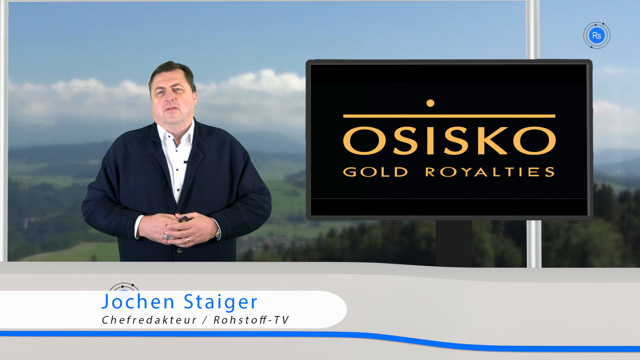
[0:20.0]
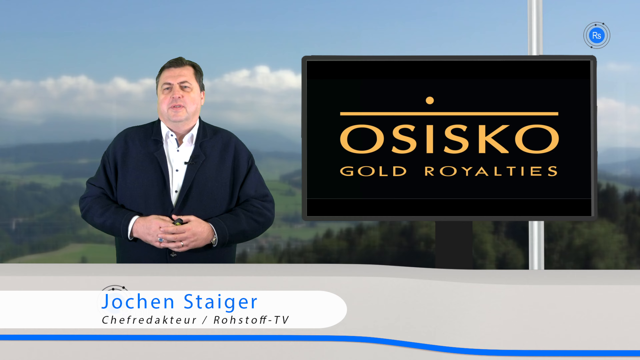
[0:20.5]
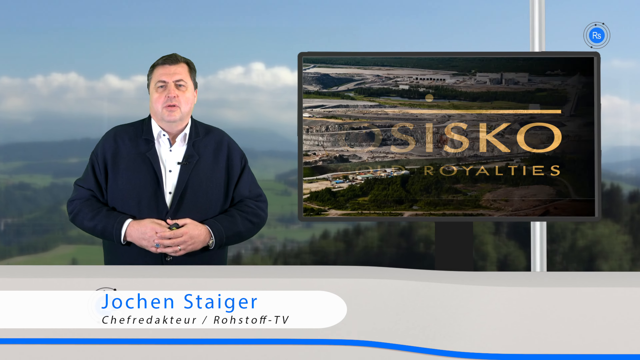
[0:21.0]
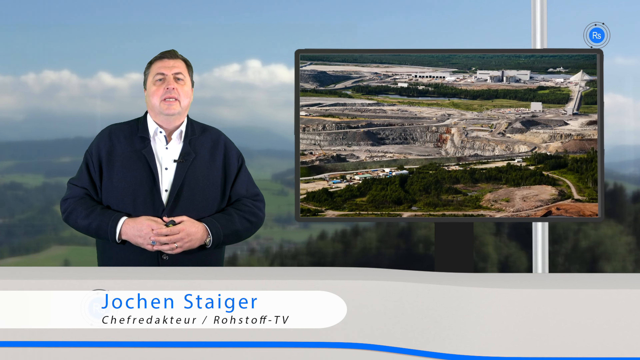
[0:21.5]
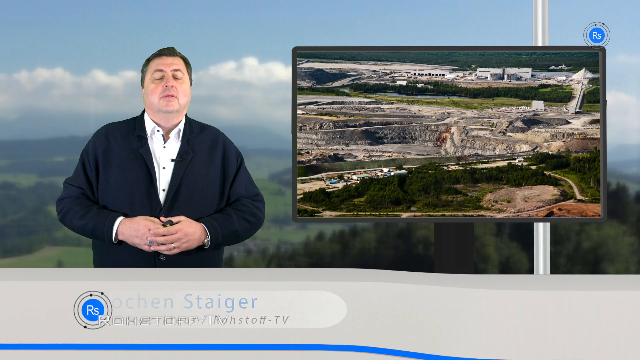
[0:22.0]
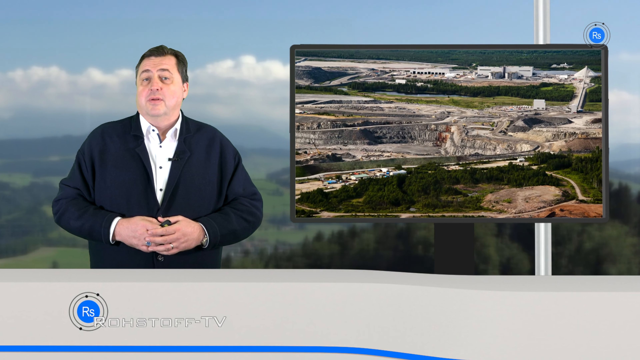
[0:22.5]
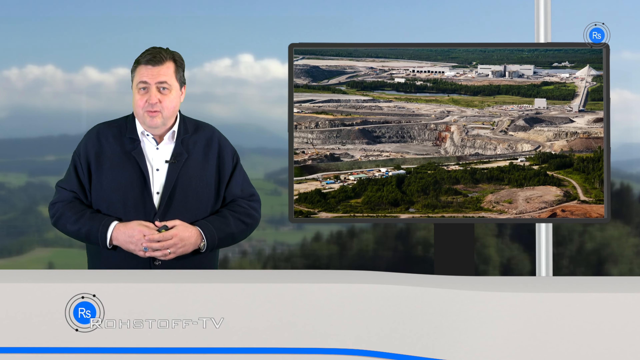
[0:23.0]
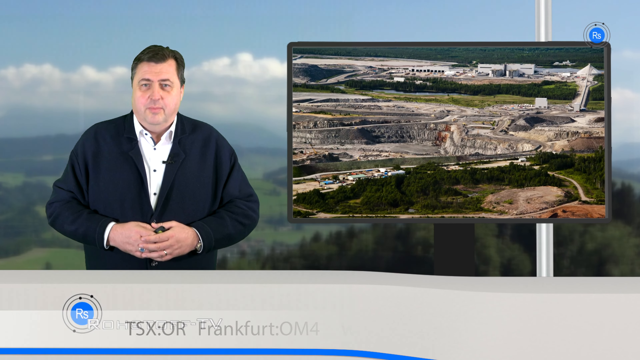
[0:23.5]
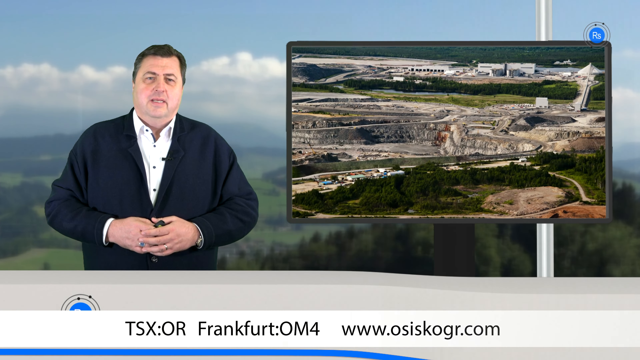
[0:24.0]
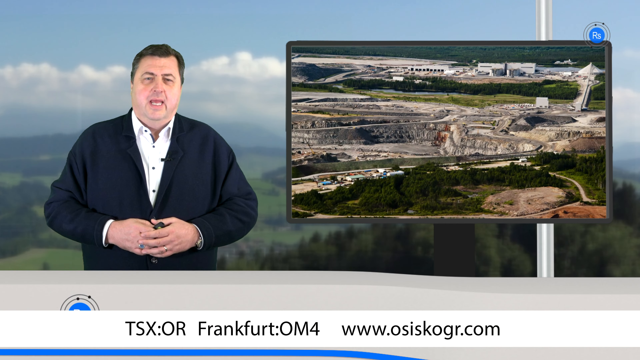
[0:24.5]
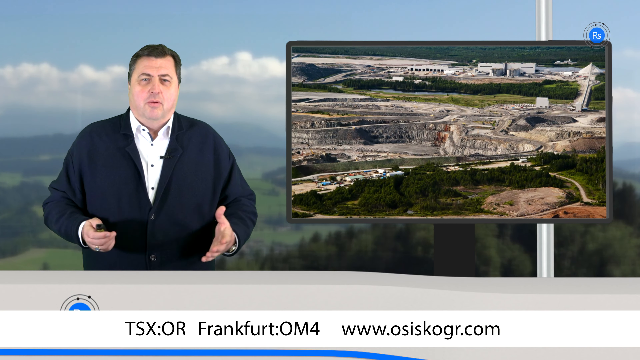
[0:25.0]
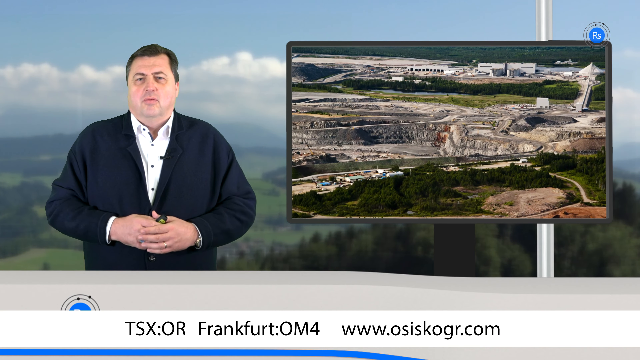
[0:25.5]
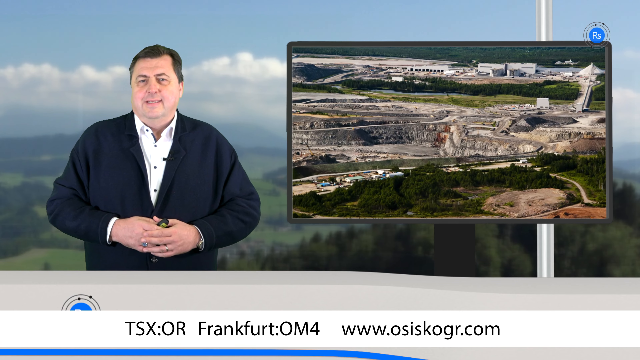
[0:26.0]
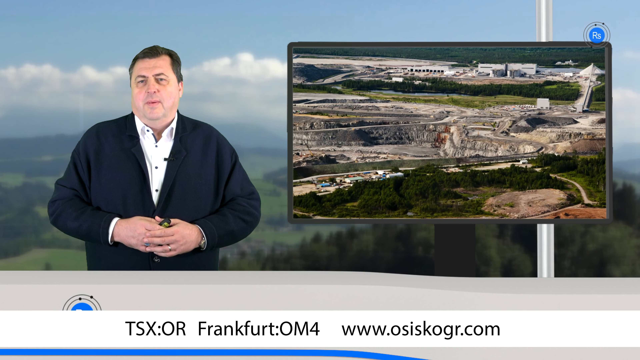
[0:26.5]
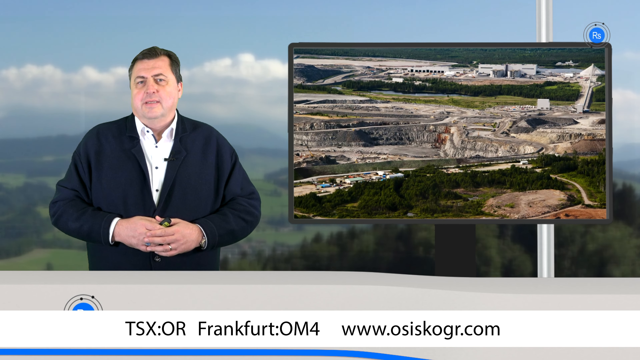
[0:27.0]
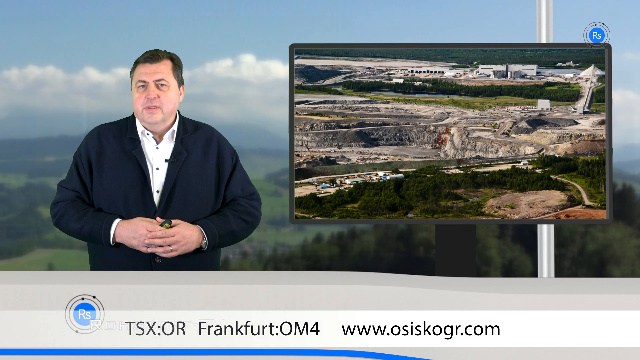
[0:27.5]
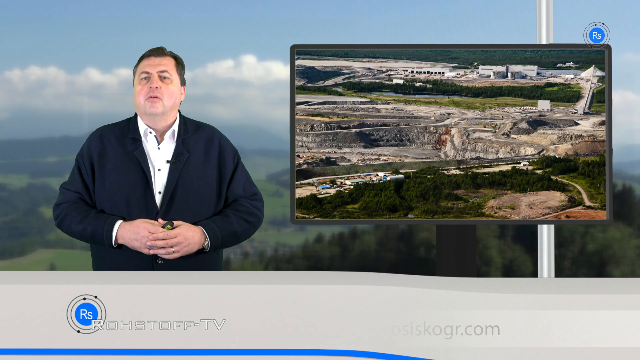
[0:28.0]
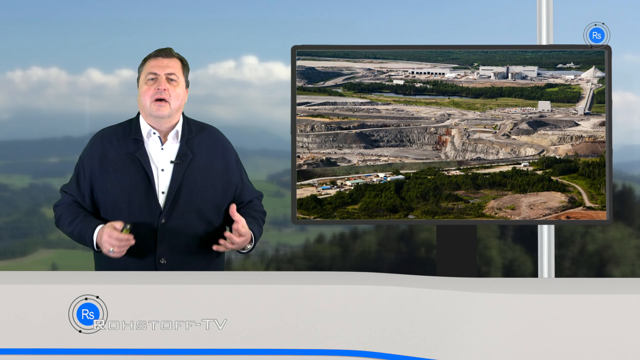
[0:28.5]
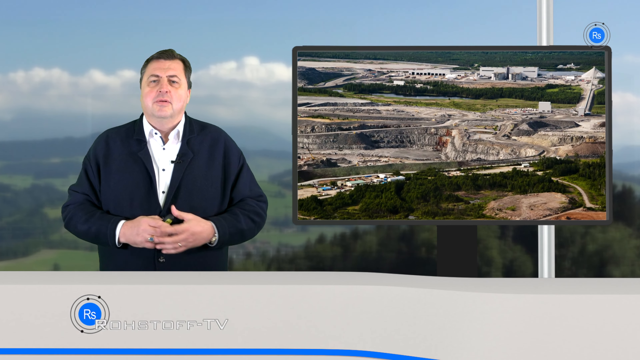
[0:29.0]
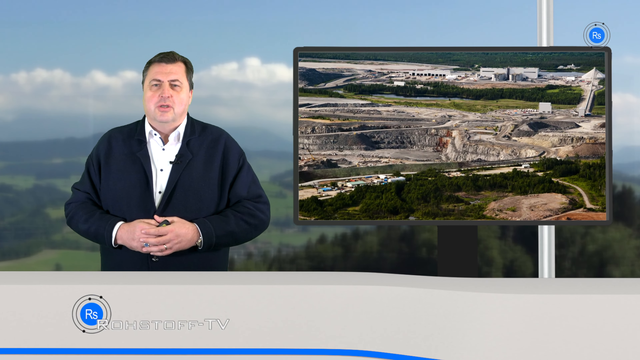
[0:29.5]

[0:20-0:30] A man named Justin Steger is on screen, talking about gold royalties. On a screen behind him is an image of a place that is not a desert but looks more like a construction site, with no visible buildings; the image is very scrambled, but some grass can be seen.